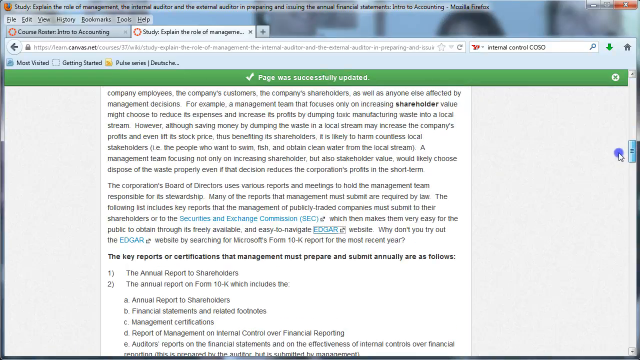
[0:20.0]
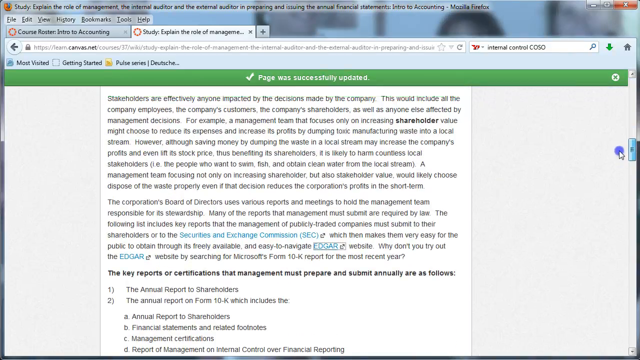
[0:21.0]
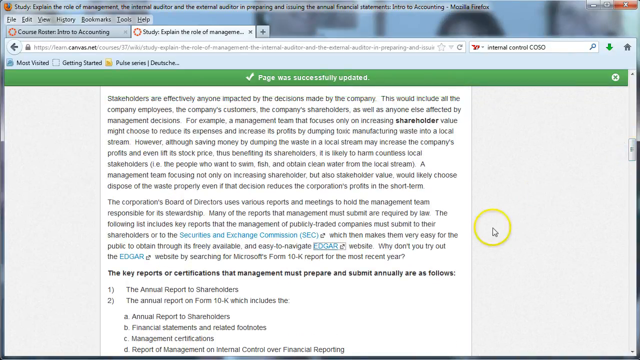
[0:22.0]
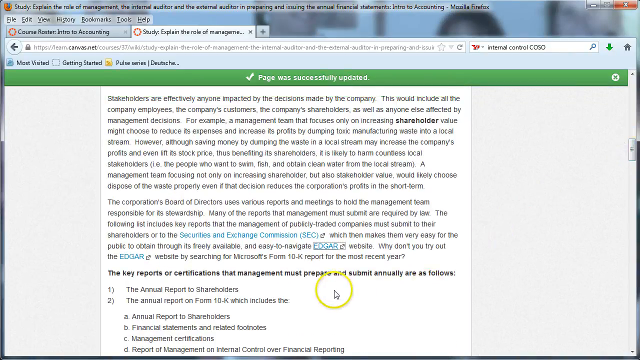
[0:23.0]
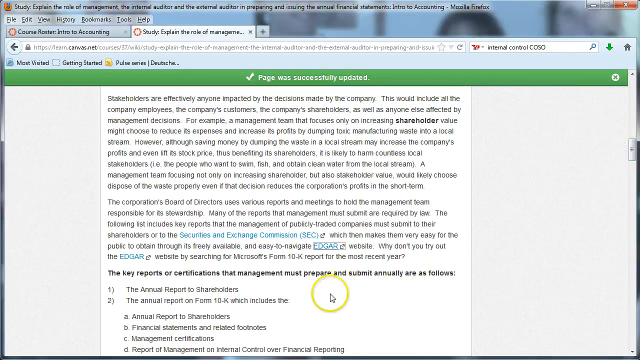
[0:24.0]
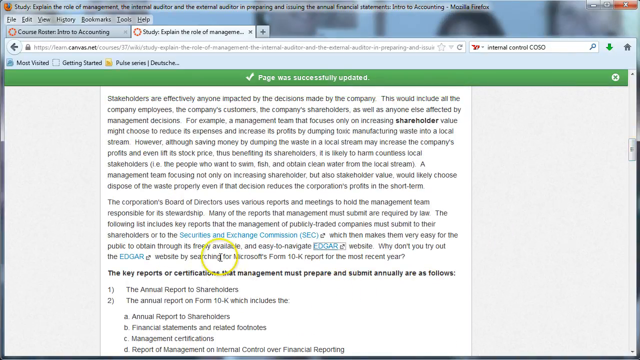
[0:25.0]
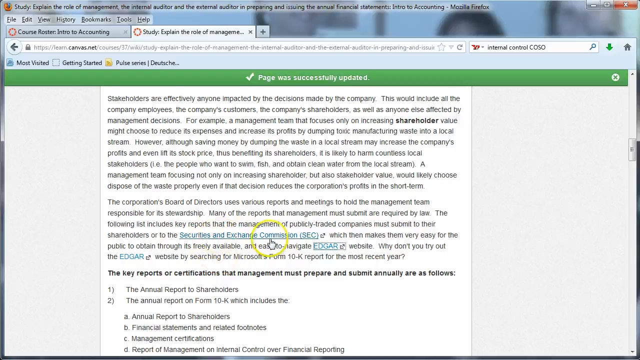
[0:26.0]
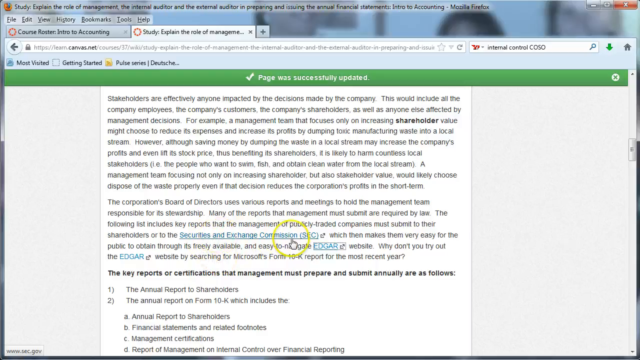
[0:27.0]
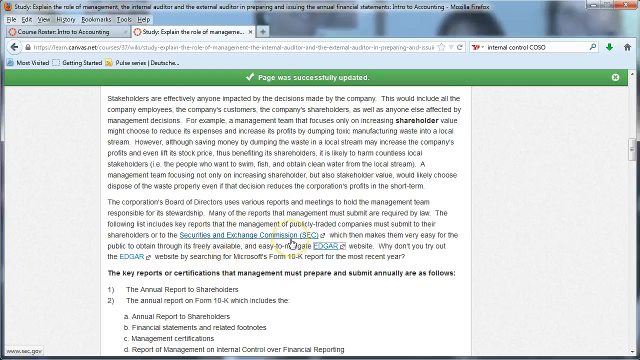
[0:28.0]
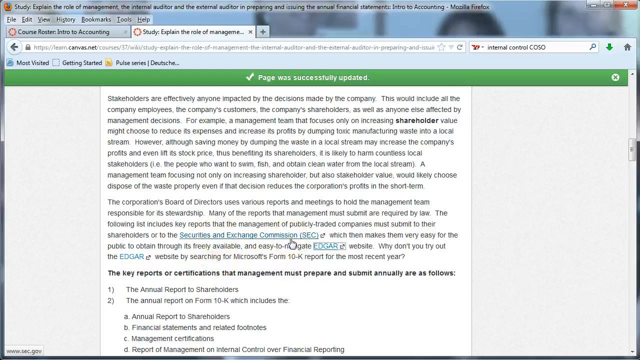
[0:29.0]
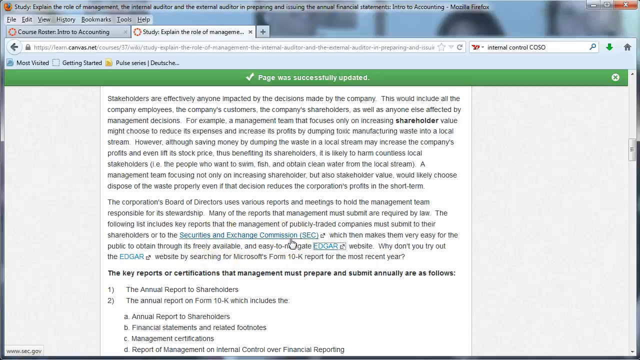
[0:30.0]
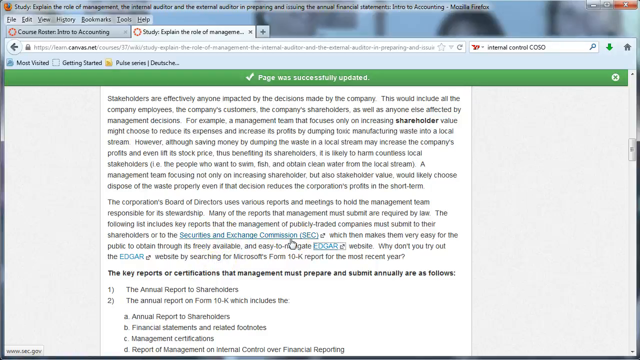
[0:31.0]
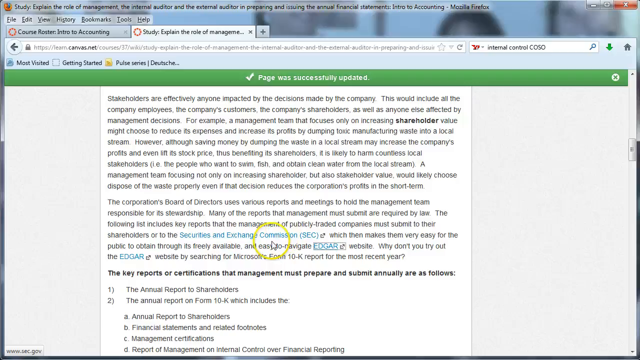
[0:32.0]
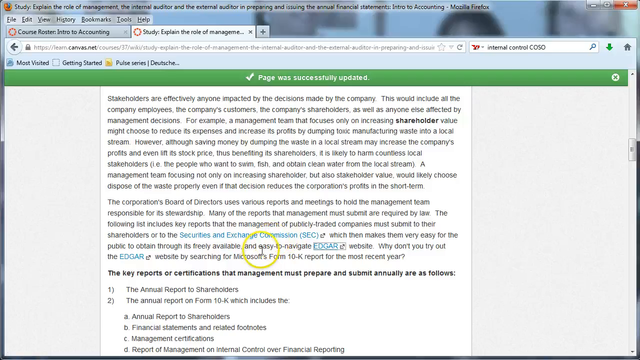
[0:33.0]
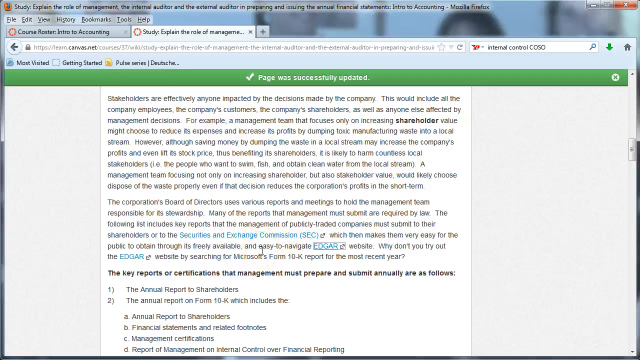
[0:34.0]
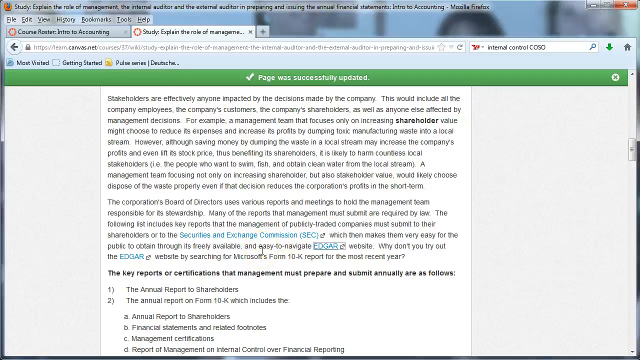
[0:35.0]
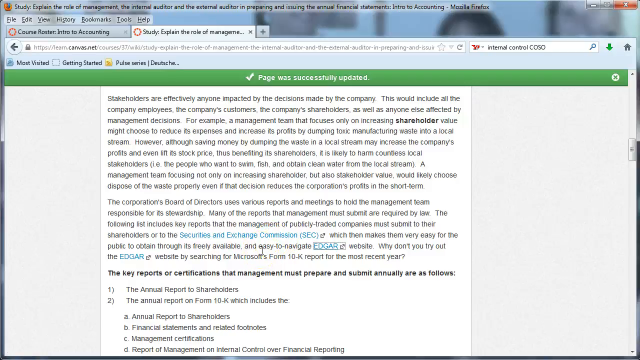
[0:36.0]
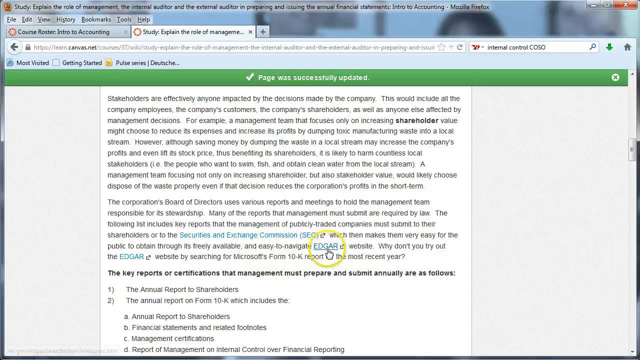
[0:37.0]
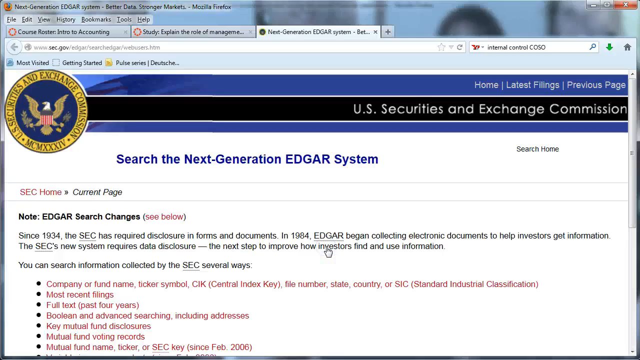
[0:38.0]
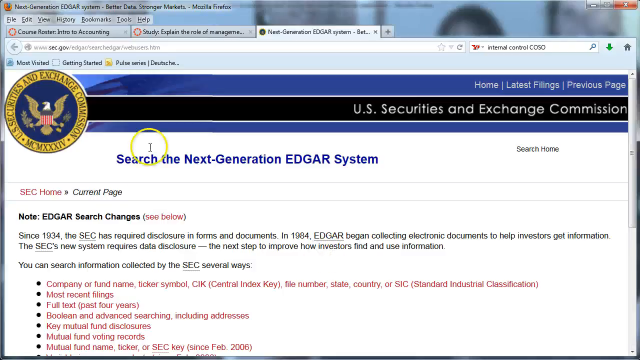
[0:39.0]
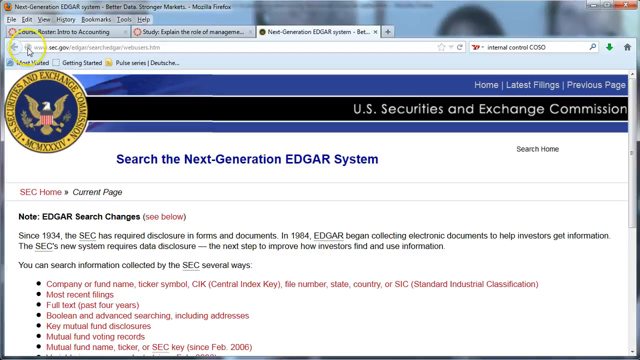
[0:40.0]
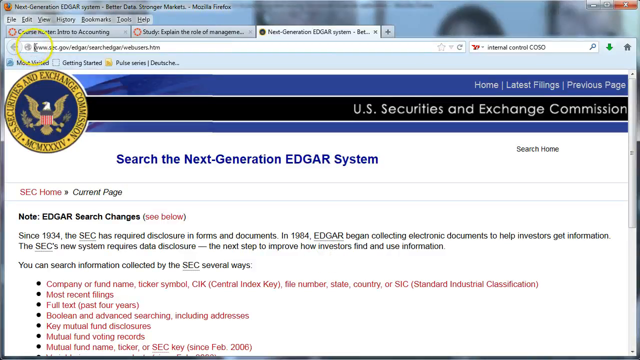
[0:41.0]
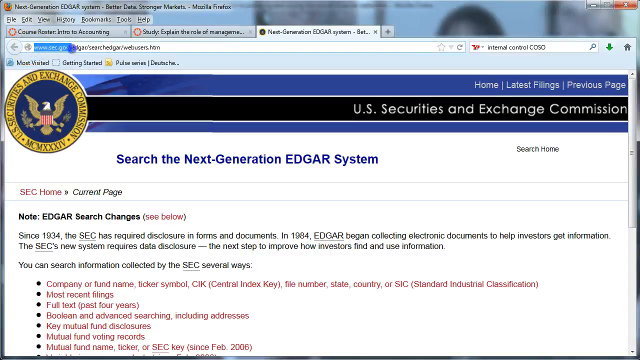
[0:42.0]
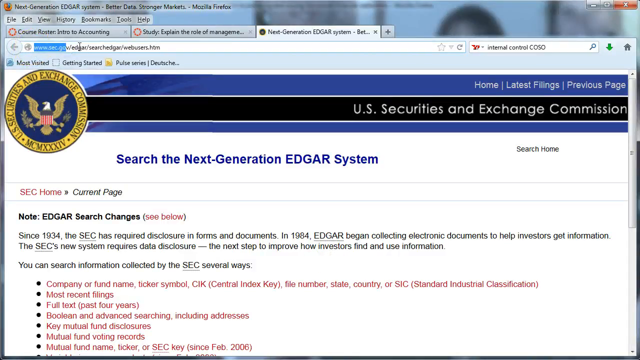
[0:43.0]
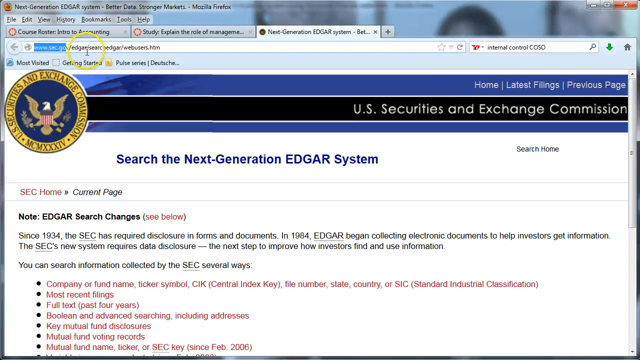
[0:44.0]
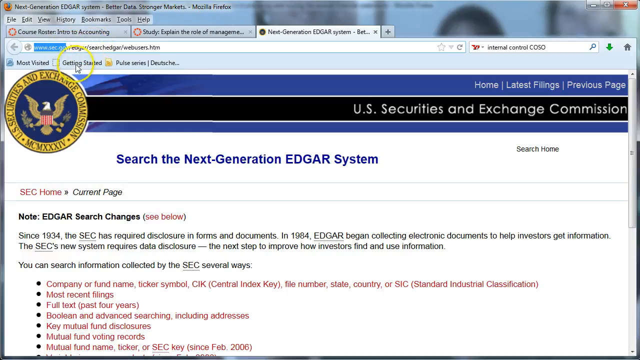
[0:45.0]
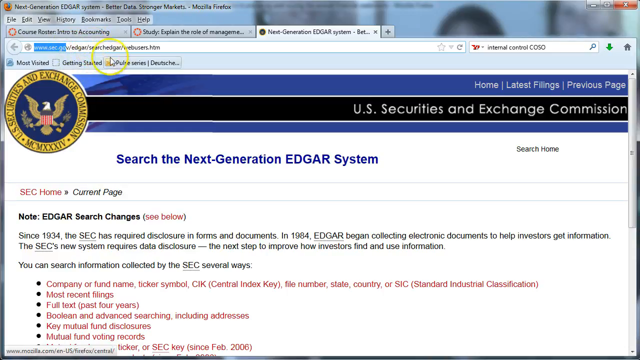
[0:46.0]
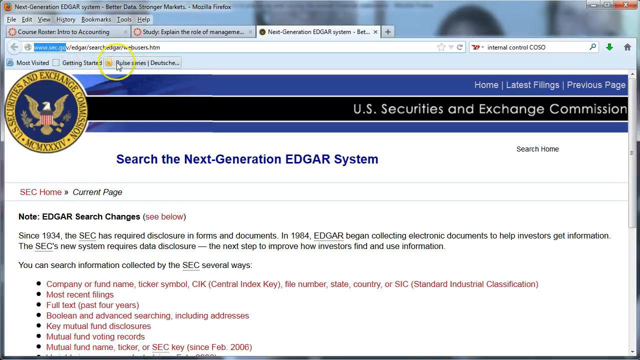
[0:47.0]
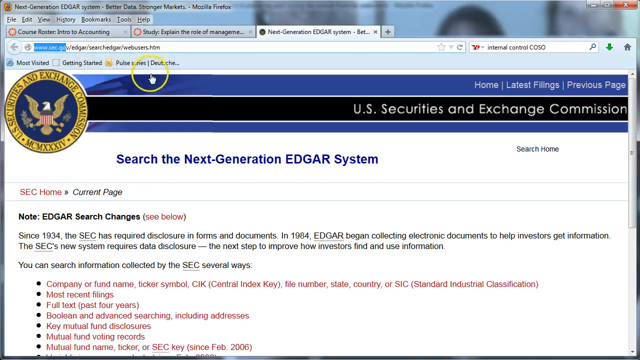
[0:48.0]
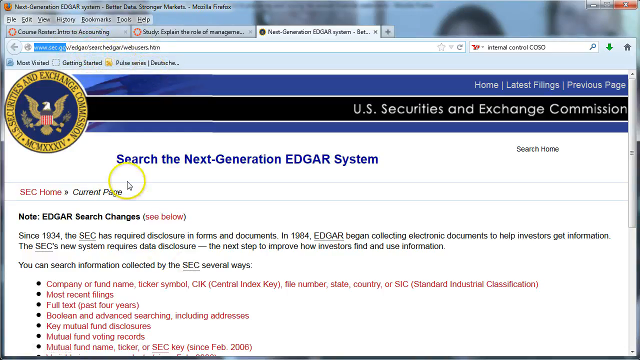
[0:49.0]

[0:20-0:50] The same page remains on screen, and attention moves to a blue hyperlink reading "Securities and Exchange Commission (SEC)". The cursor then clicks on a hyperlink just below it labeled EDGAR in all caps, which appears to be a government next-generation system, something like a search engine related to documentation. The page also contains information about abiding by United States laws.